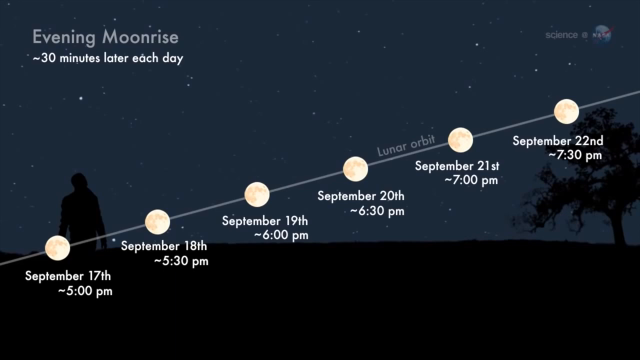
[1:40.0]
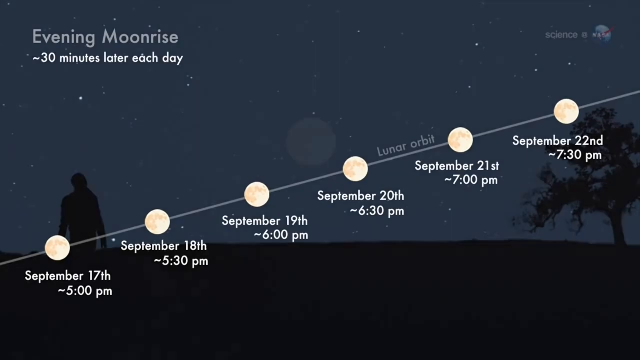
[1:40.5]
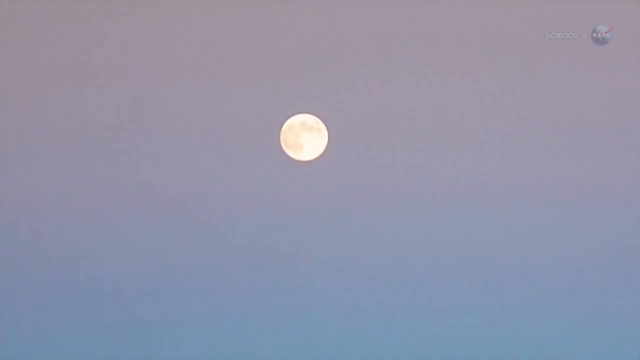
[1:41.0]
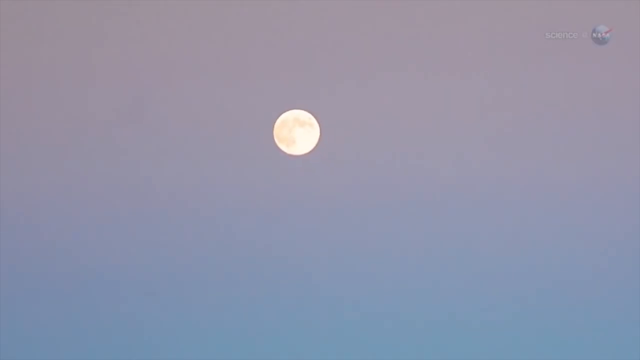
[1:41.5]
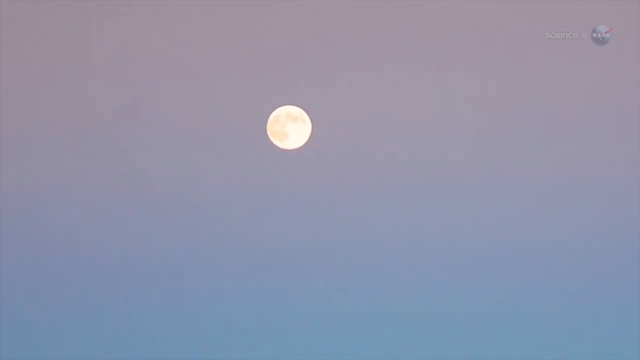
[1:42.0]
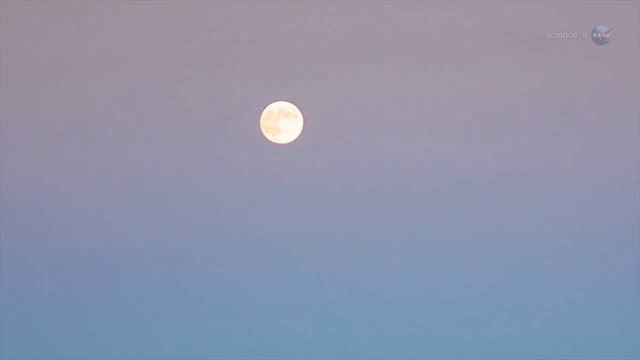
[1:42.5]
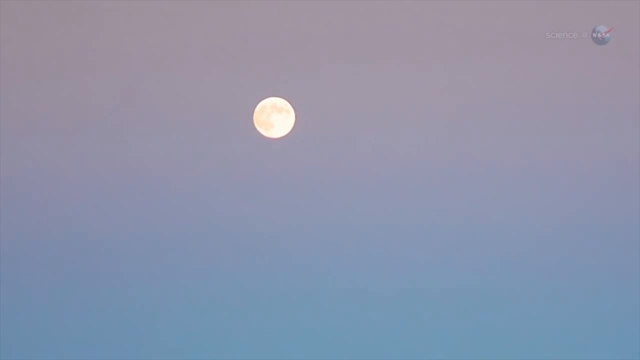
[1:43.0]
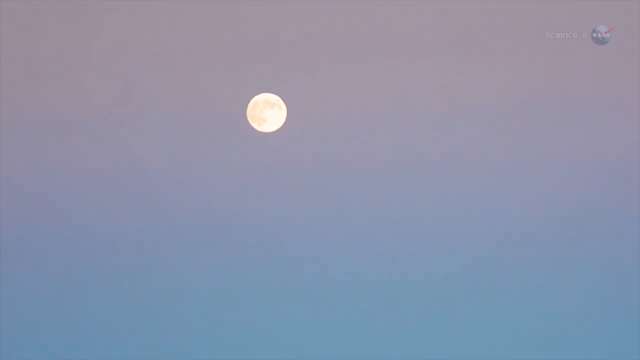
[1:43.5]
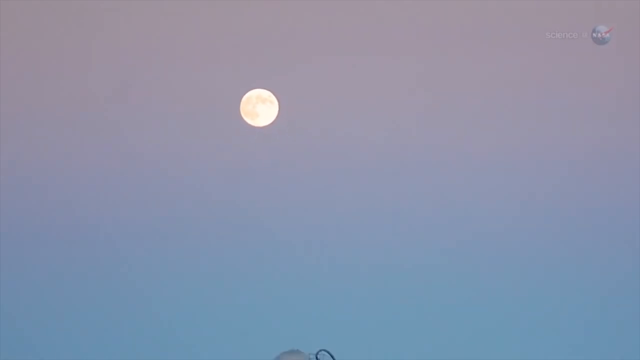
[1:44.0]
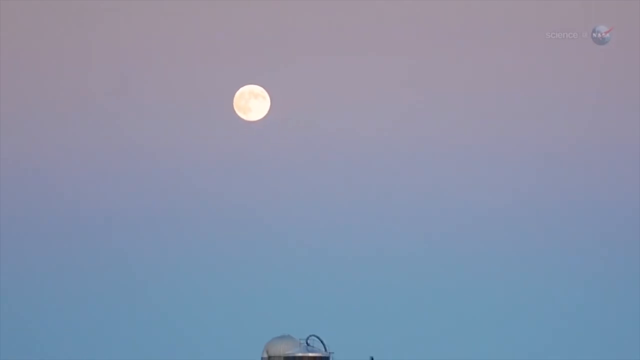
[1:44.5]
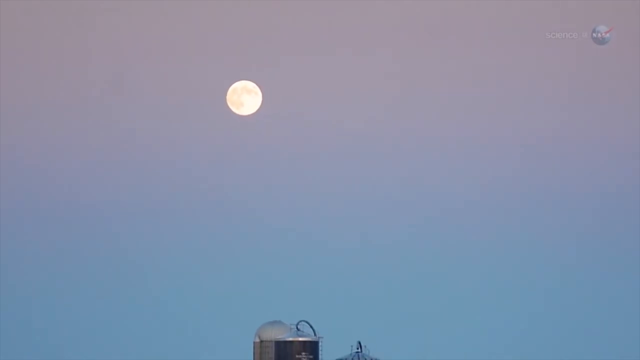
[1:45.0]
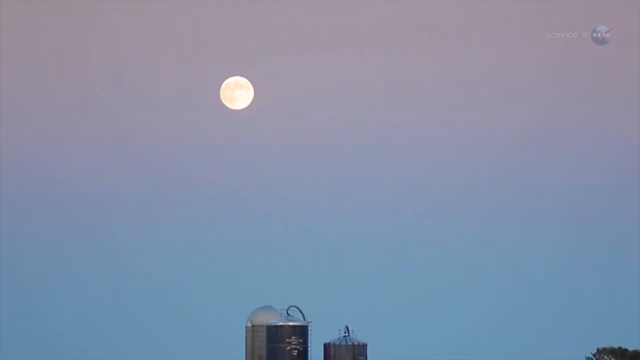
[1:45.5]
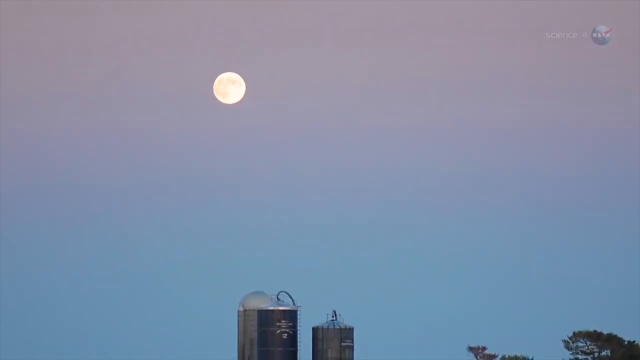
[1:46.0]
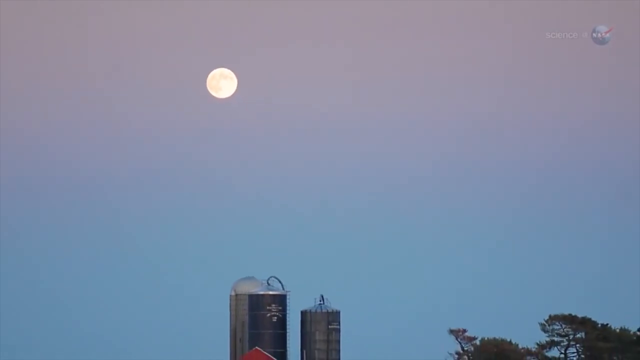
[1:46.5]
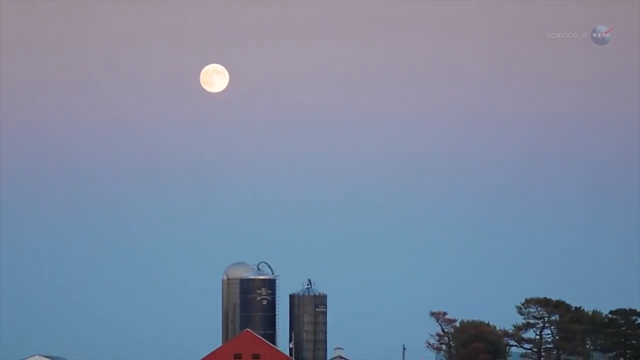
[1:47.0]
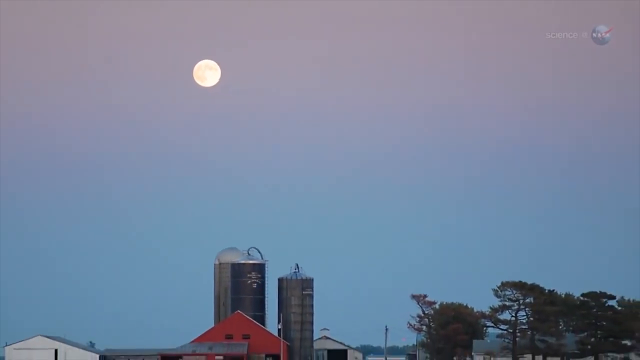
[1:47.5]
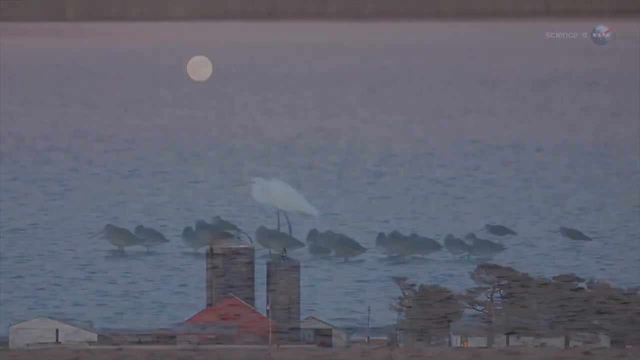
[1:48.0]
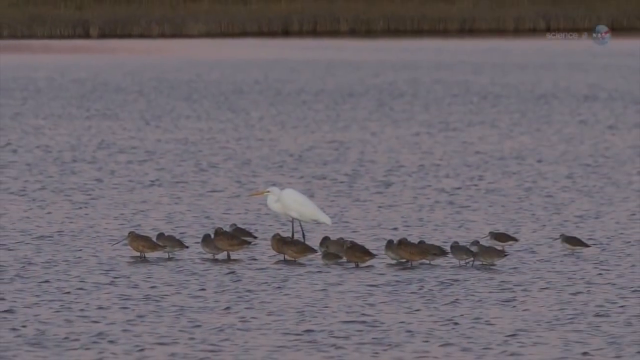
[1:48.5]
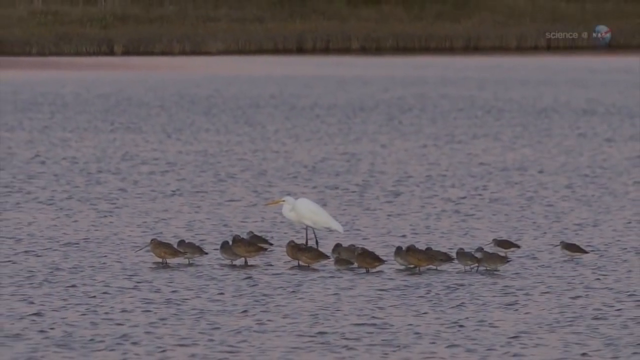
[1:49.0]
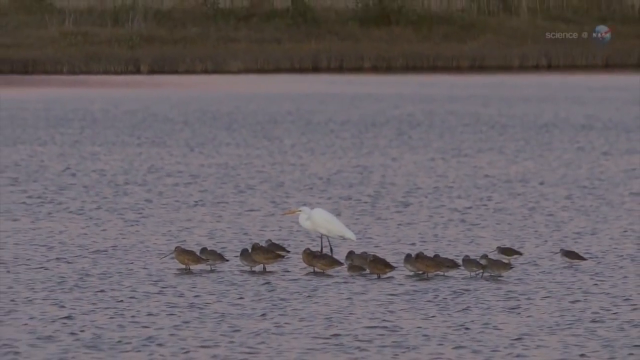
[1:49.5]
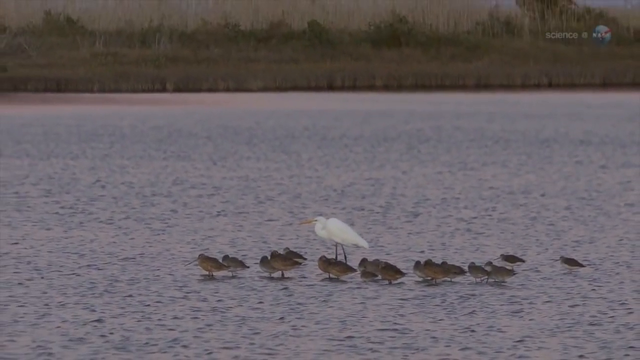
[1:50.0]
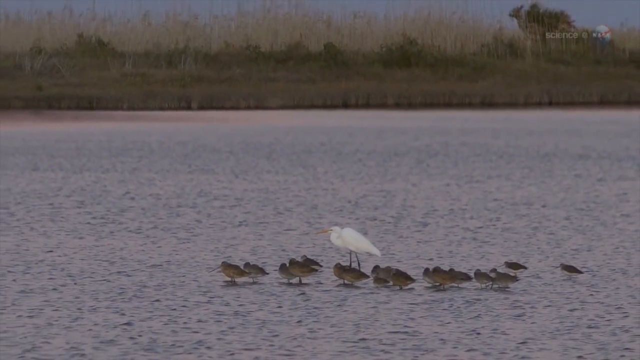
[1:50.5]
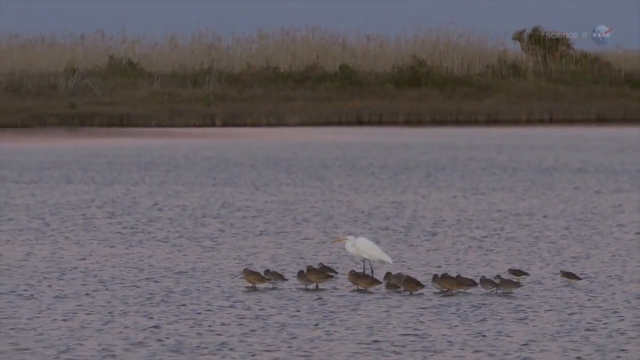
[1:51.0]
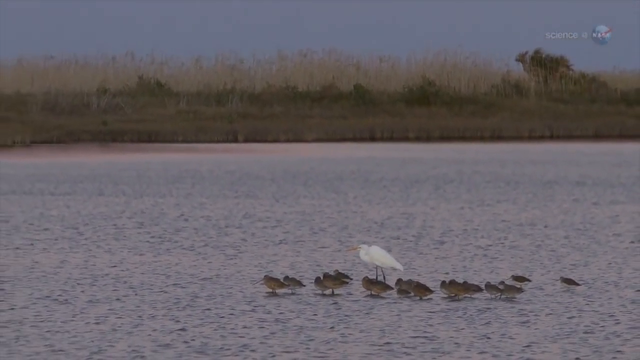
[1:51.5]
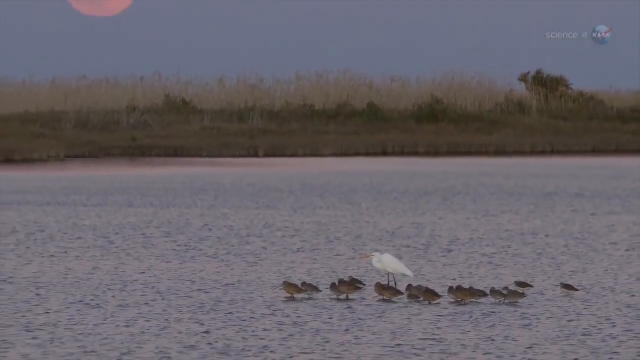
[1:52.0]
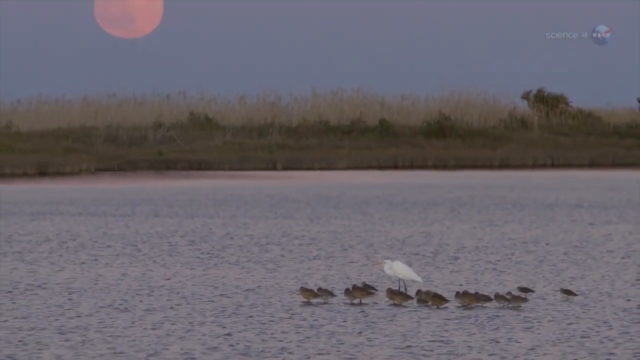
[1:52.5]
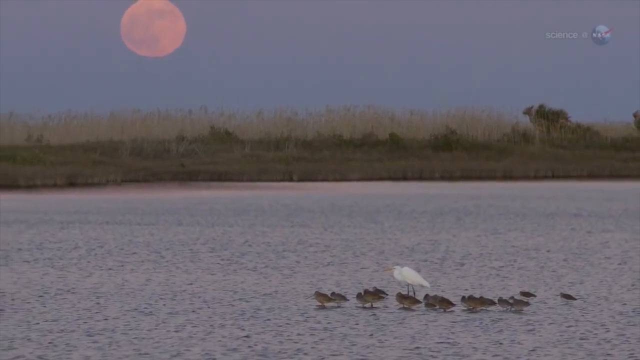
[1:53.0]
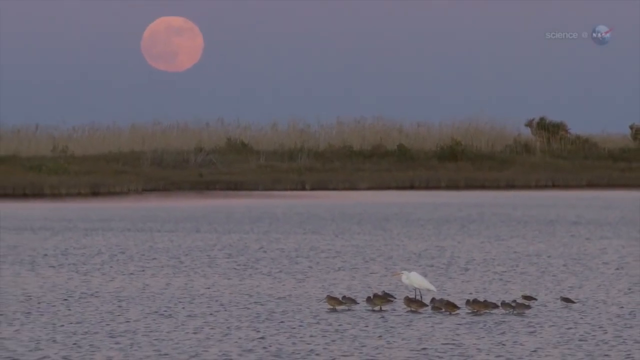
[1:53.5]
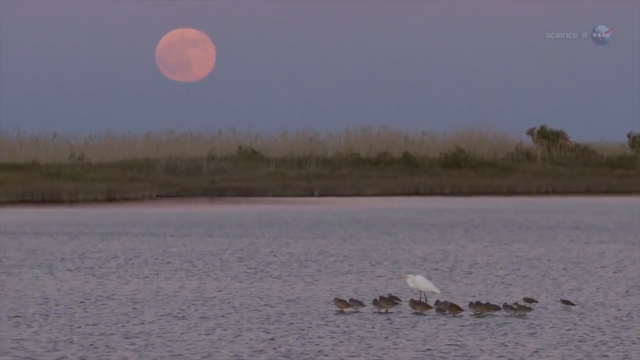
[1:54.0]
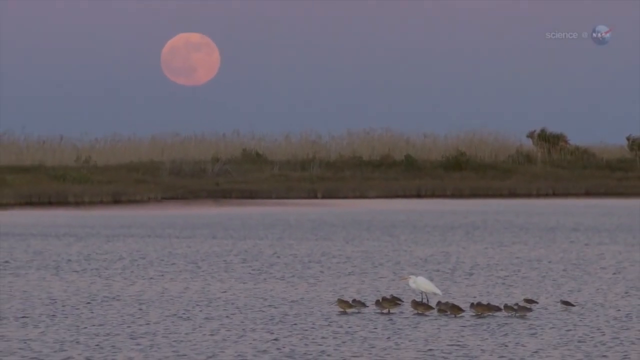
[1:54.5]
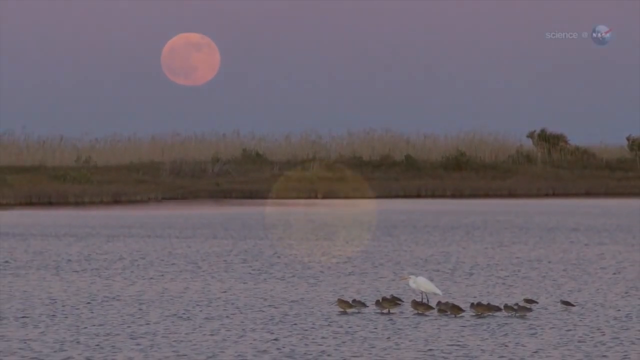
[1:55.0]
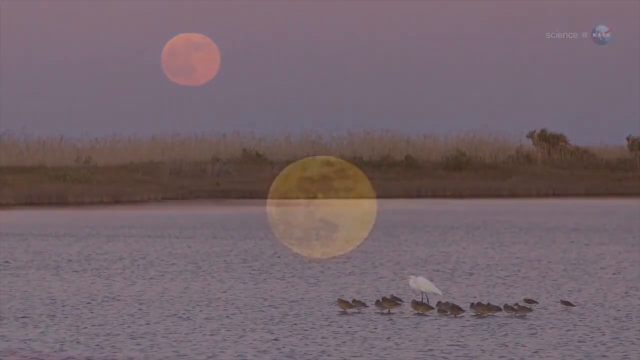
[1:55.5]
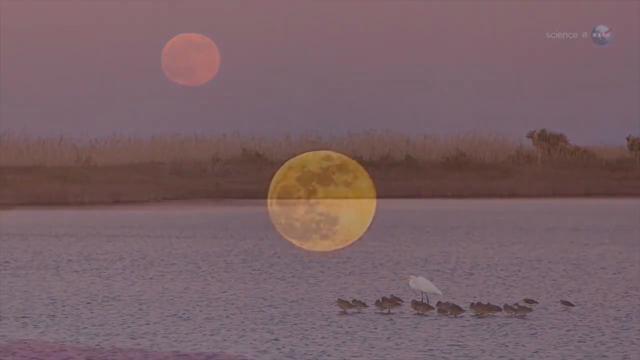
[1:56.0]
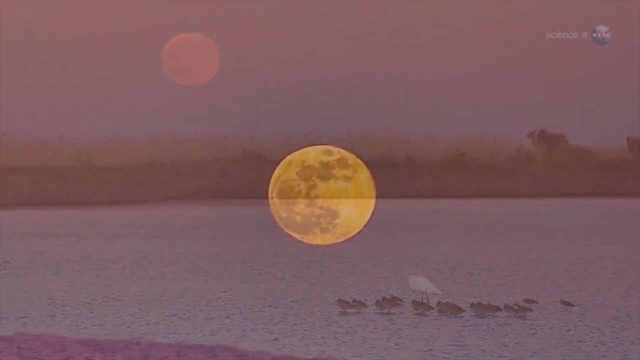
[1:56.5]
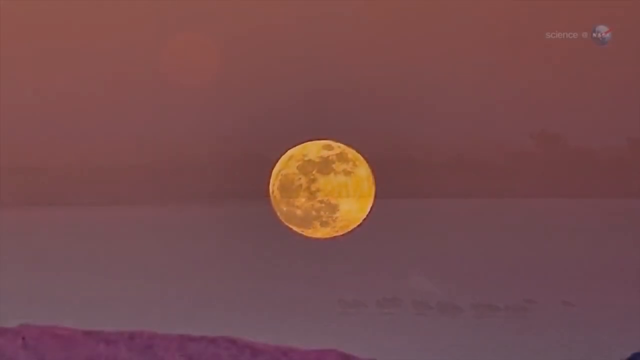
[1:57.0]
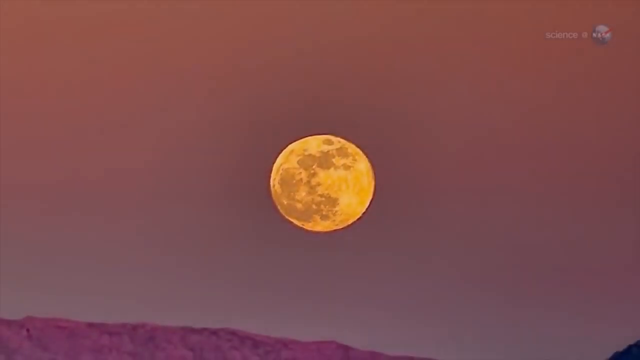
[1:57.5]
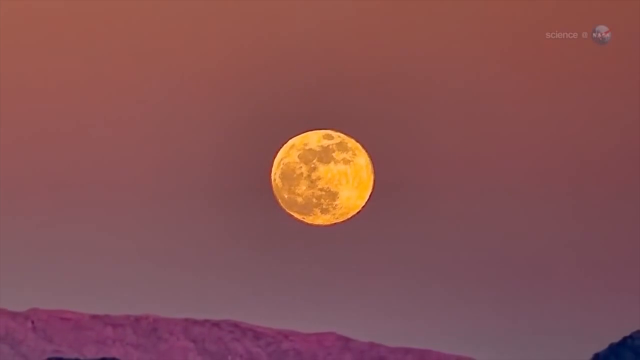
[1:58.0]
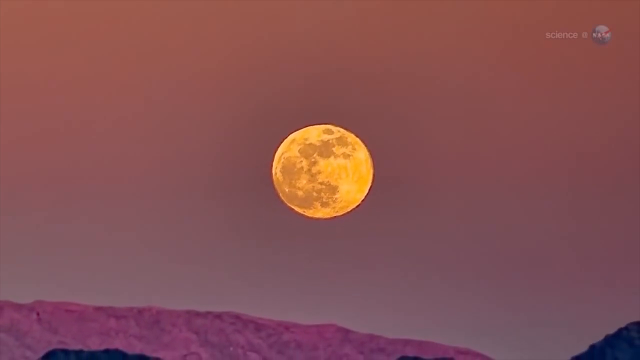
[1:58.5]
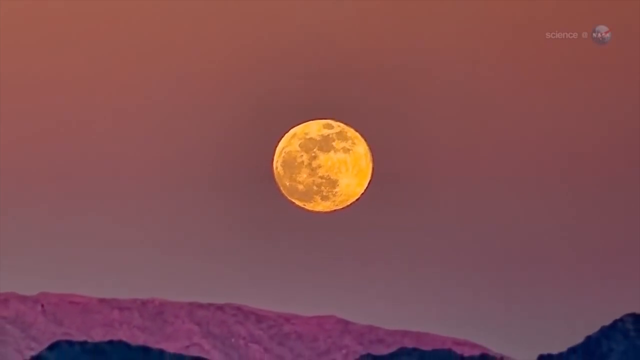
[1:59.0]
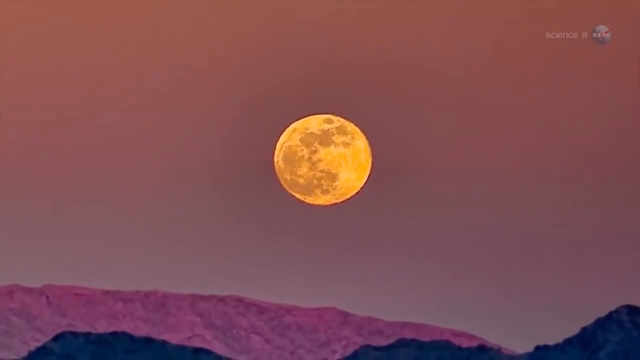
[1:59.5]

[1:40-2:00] A full moon in the sky, with a bluish purple color, is shown as the view zooms out from it. In this first part, the tops of what look like grain silos, maybe on a farm, and the tops of some trees begin to appear, but are not shown fully. The scene transitions to a body of water with a large white bird and some smaller brown birds, which looks like a painting, with a grassy area in the background and a red moon; the view zooms out kind of fast from the birds. It then transitions to another landscape with a yellow moon in the center against a kind of reddish-purple sky, and a landscape at the bottom that kind of looks like mountains.